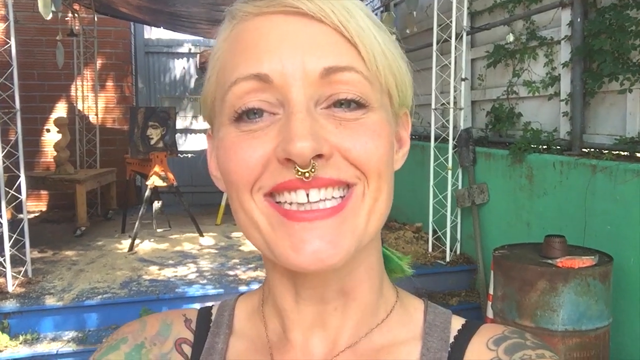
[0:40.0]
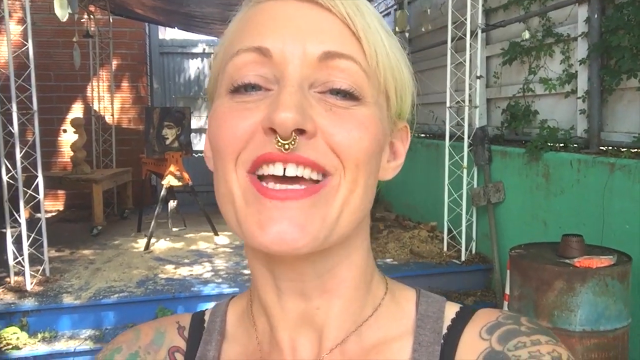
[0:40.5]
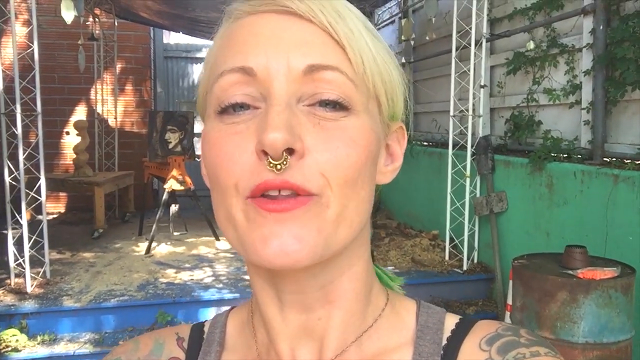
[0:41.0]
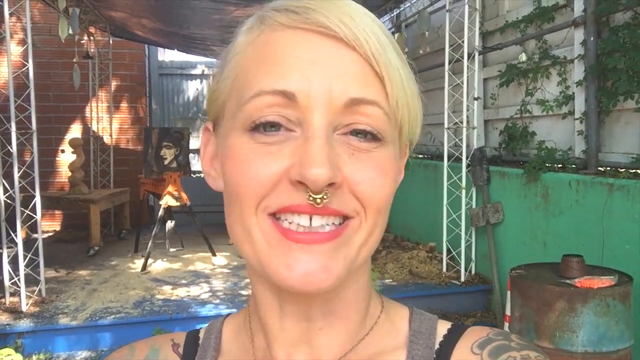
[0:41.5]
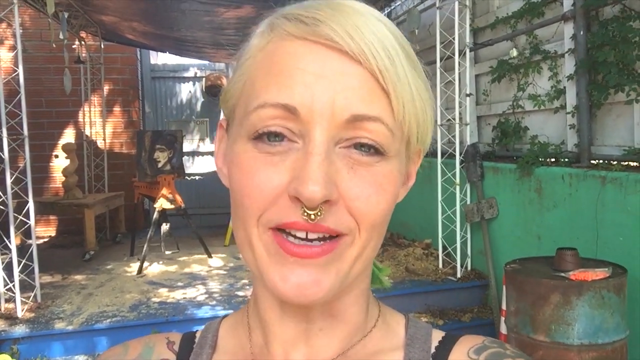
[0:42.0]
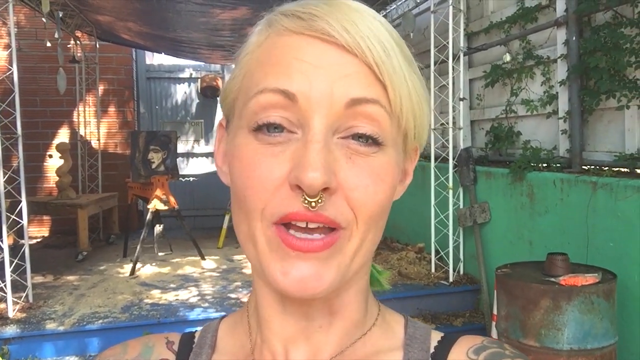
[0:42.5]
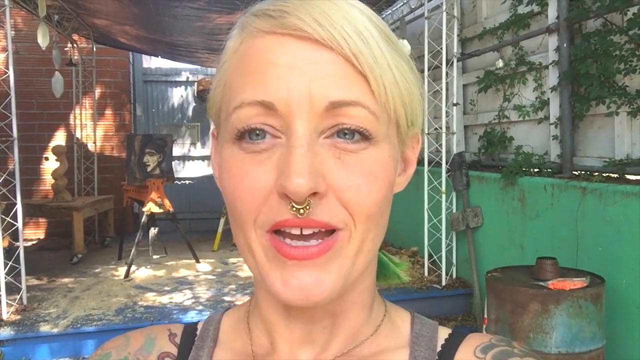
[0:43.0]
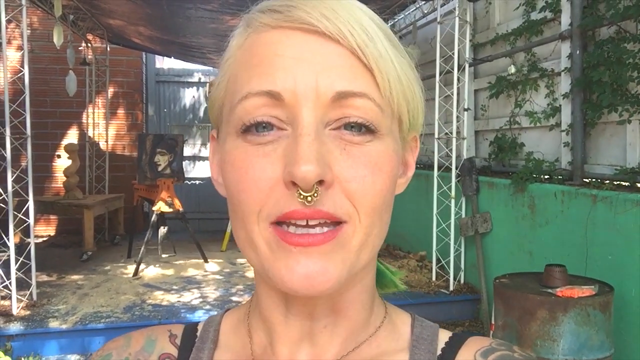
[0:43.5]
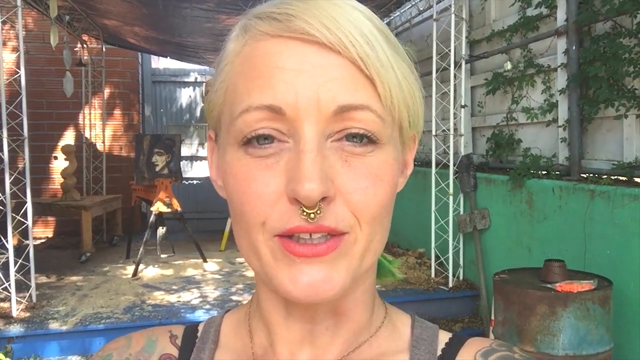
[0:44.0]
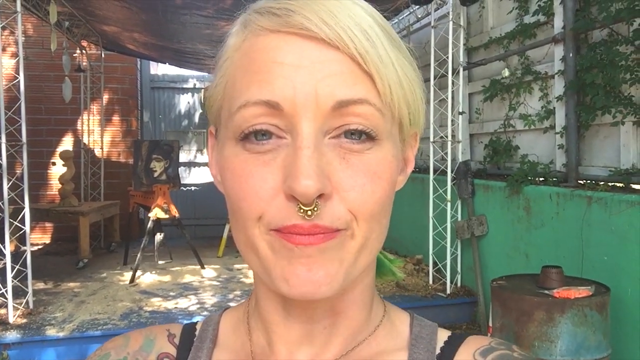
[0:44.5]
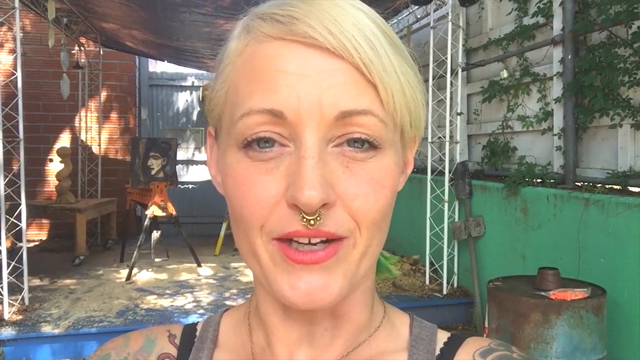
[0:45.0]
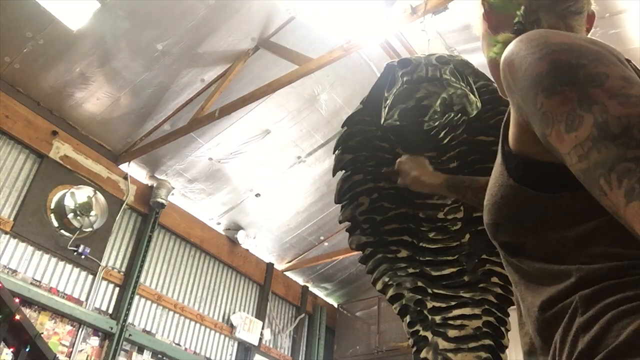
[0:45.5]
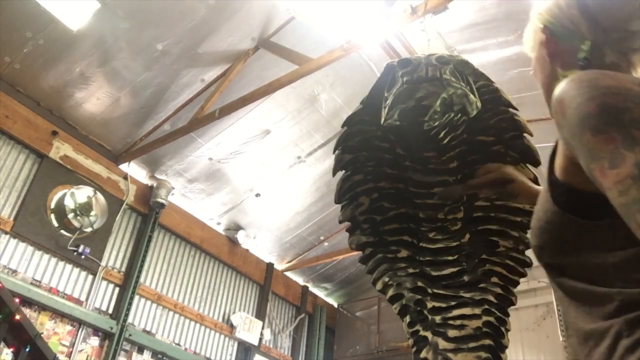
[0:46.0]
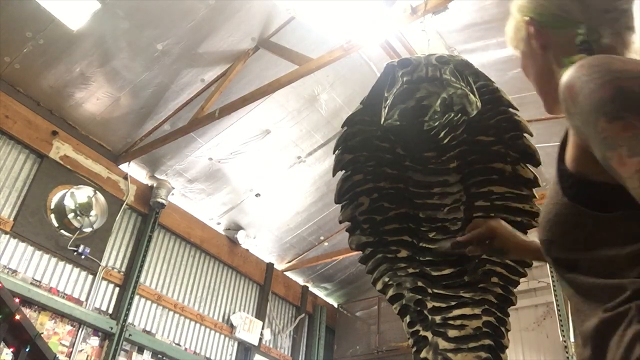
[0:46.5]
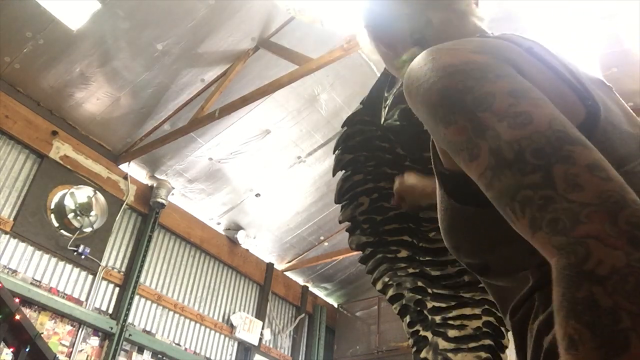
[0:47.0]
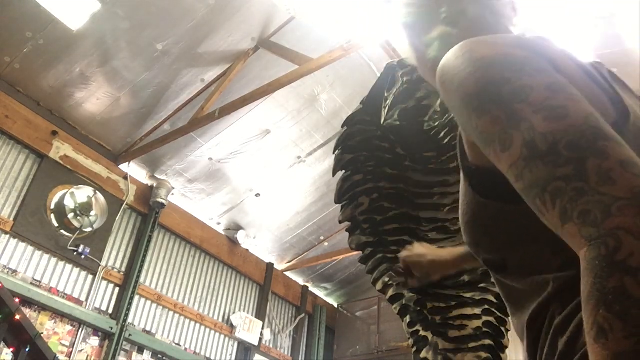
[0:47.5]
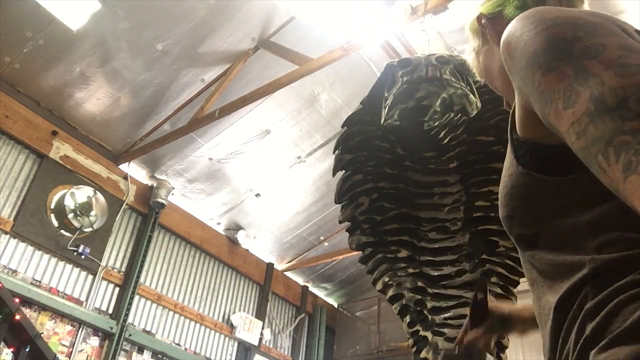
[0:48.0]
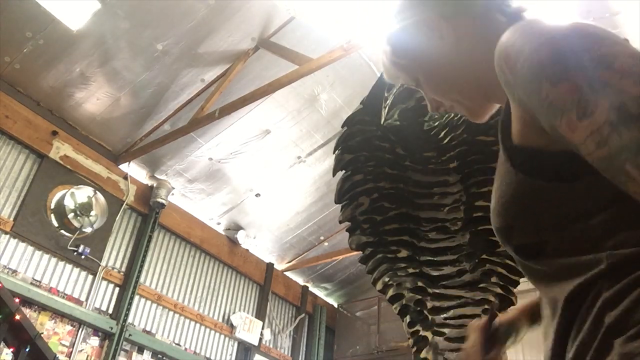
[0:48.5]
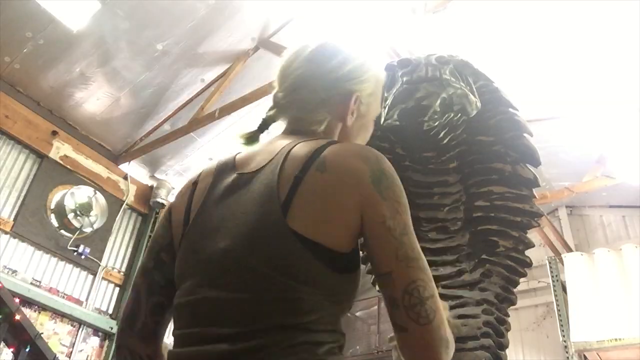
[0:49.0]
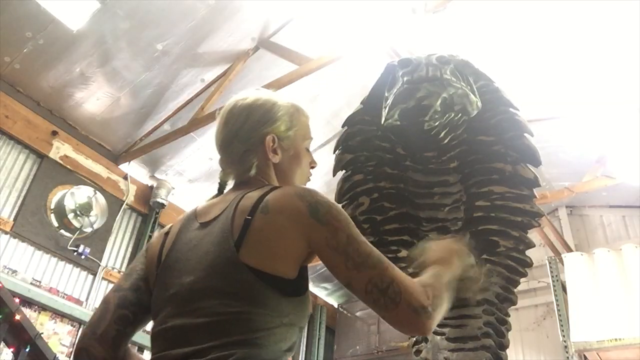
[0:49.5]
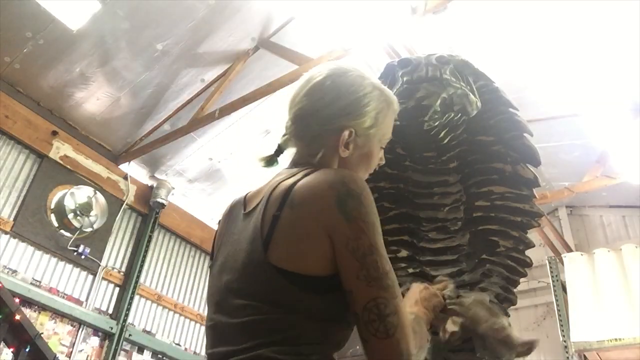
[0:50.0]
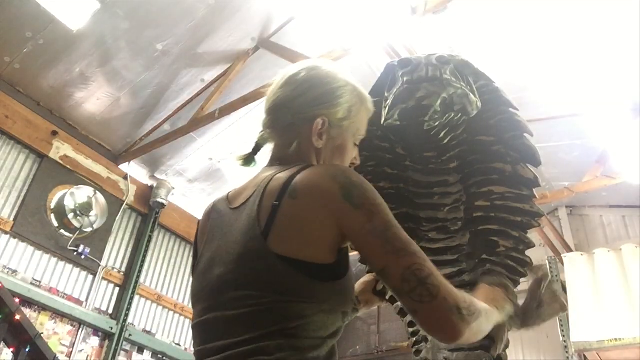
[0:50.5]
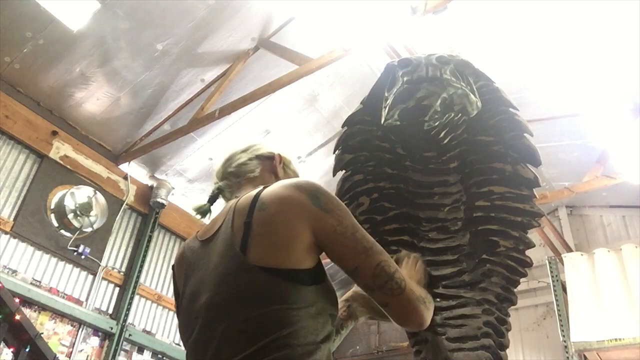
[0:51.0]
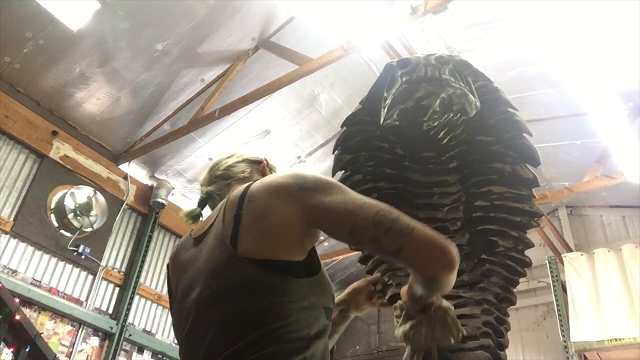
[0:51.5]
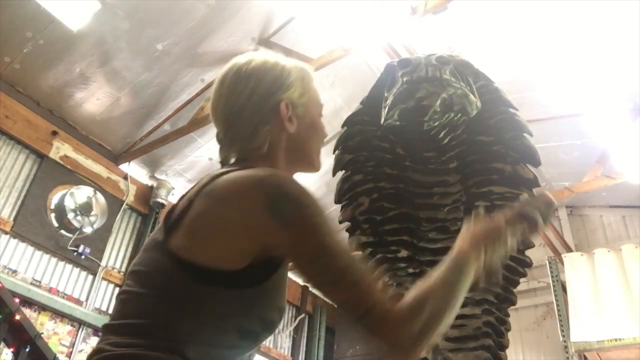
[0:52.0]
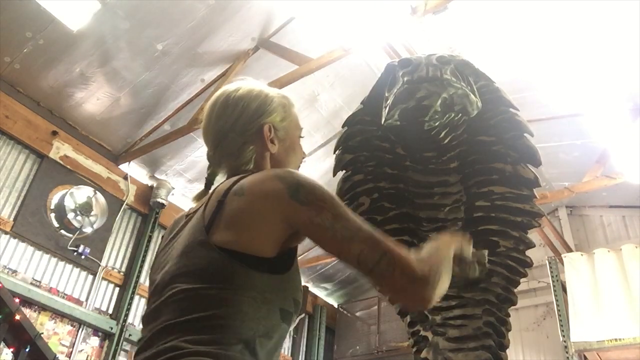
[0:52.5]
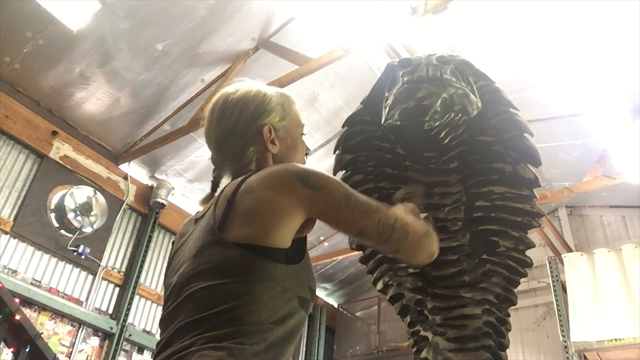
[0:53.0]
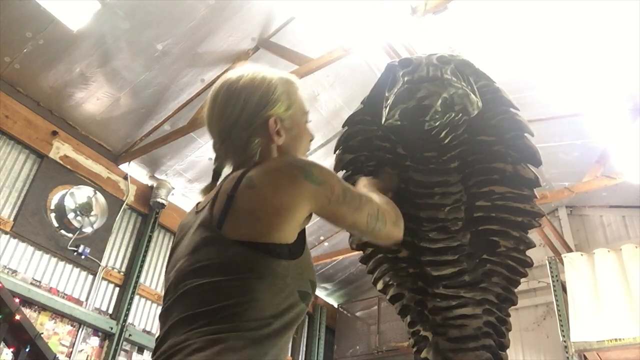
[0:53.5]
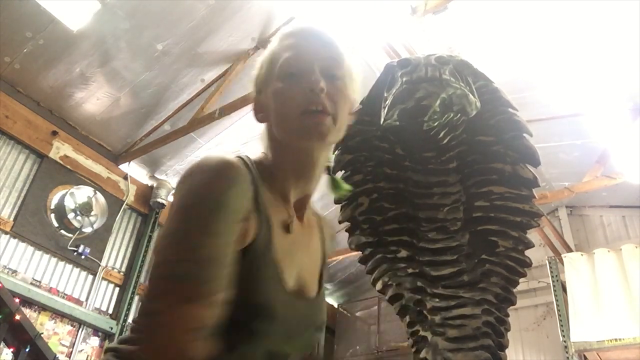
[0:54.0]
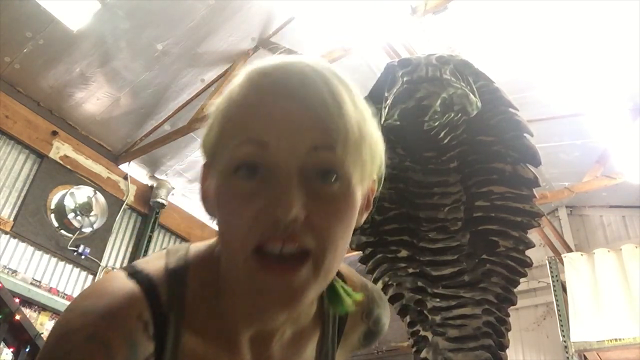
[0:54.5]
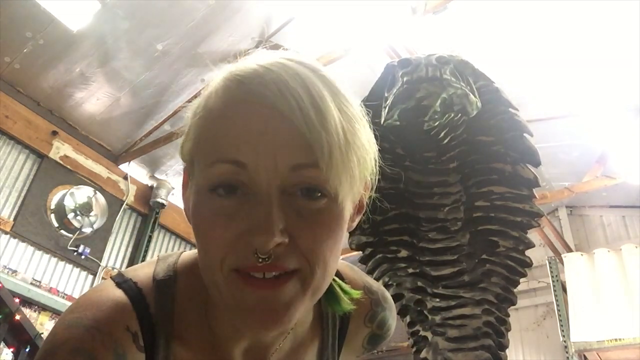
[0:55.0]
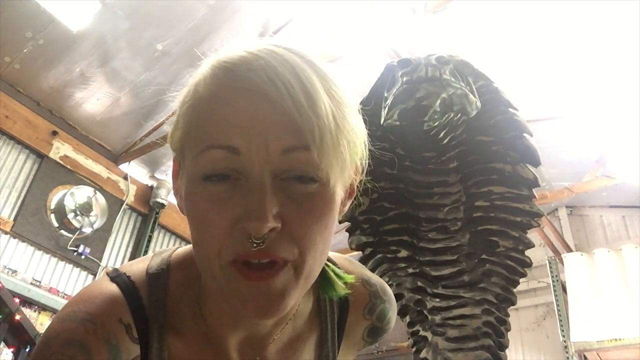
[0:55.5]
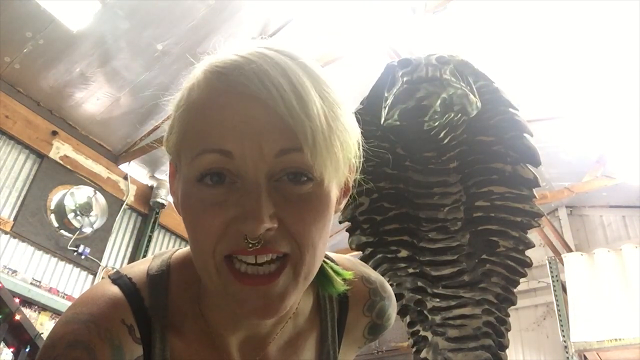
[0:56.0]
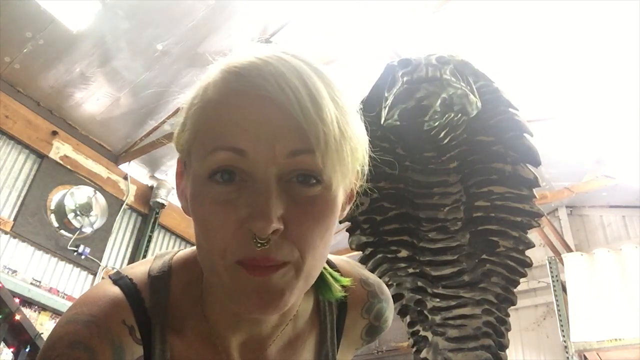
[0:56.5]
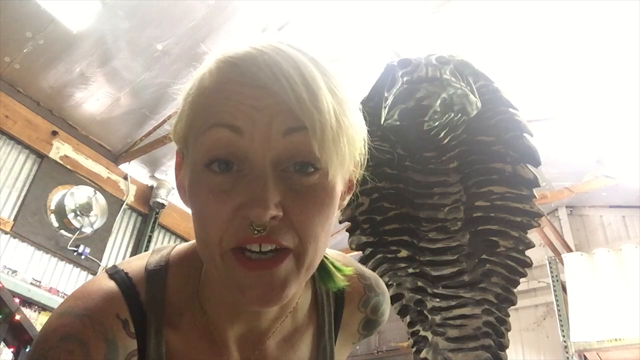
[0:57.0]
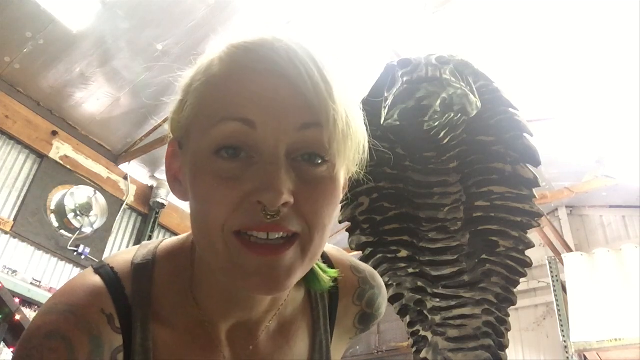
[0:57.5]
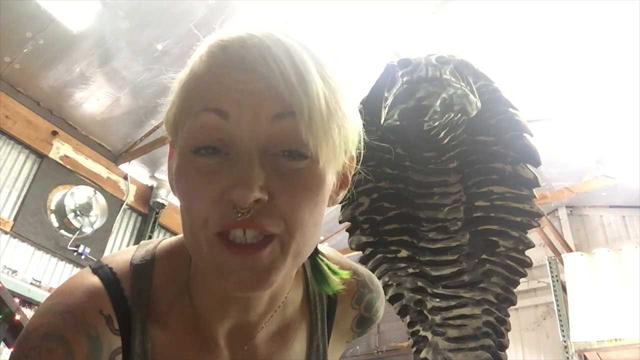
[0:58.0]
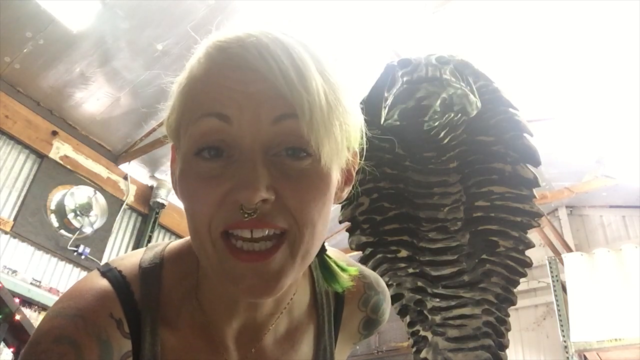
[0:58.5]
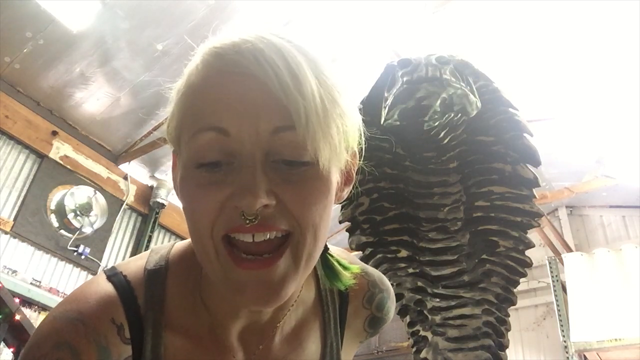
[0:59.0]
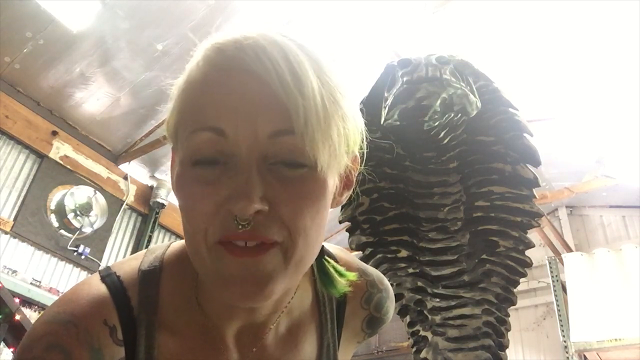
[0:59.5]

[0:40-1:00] In the garden, the woman keeps talking to the audience, raising her eyebrows up and down; she seems to enjoy emphasising what she says. The video cuts to her in a shed with a tin roof and corrugated sides, working from underneath on another wood sculpture. She appears to be painting it, and the footage is sped up. She has tattoos on her arm; she paints with her right hand while her left hand is down beside her. As the footage speeds up, the paint progresses, and then she wipes the sculpture down. Once finished, she turns, bends down, faces the camera and starts talking to the audience. She wears a black strappy top, and she talks as if letting the audience into a secret.